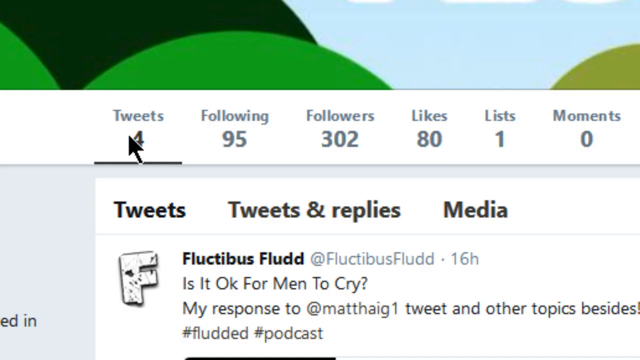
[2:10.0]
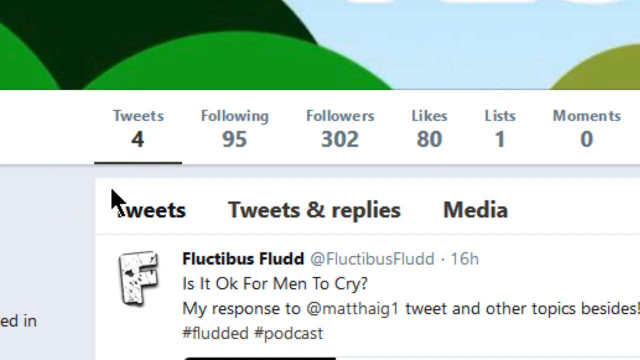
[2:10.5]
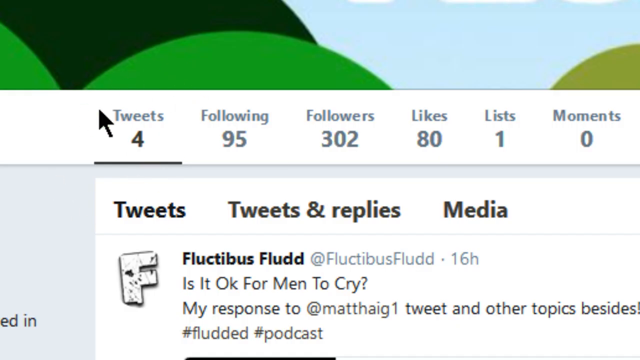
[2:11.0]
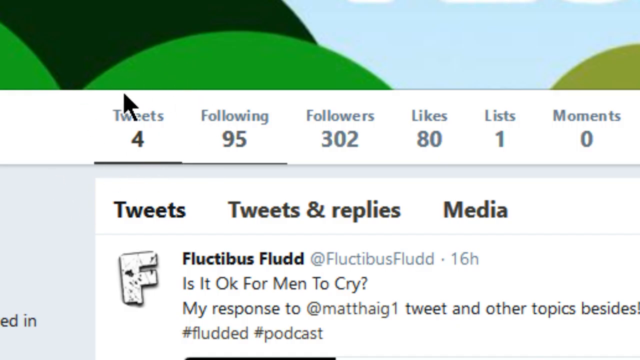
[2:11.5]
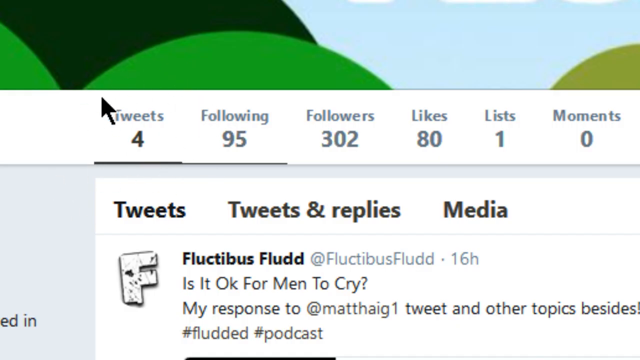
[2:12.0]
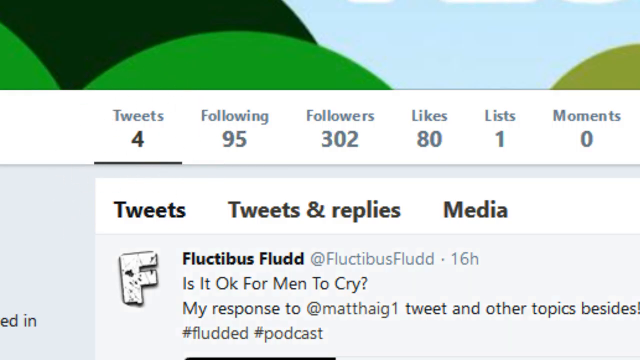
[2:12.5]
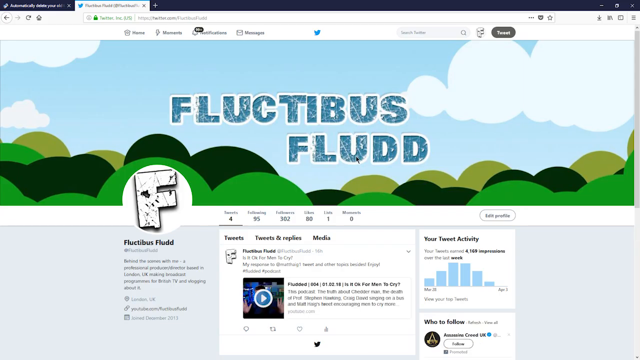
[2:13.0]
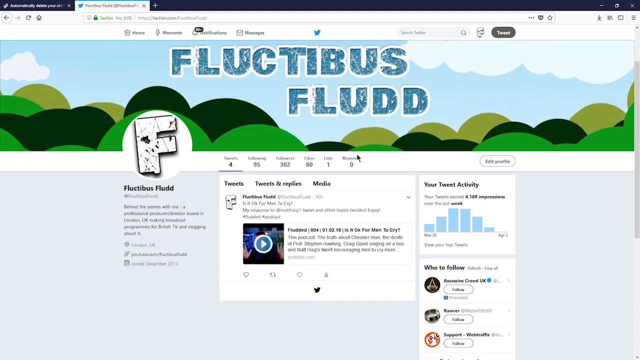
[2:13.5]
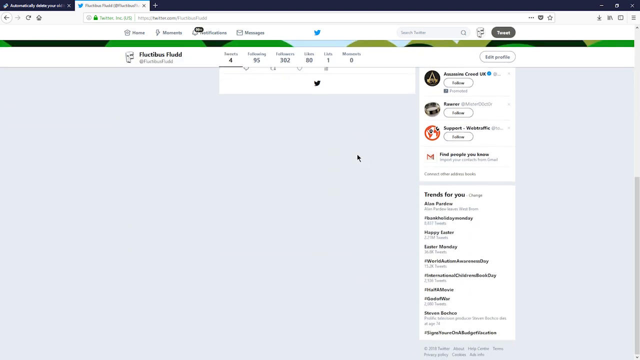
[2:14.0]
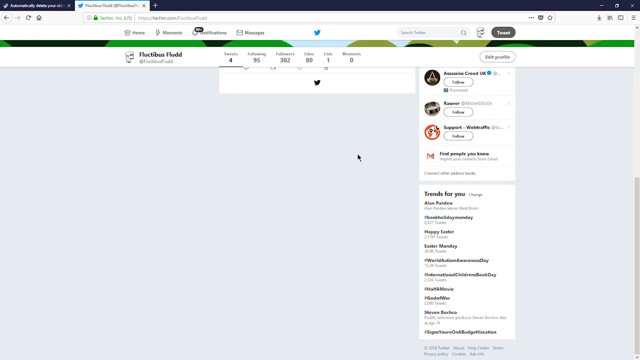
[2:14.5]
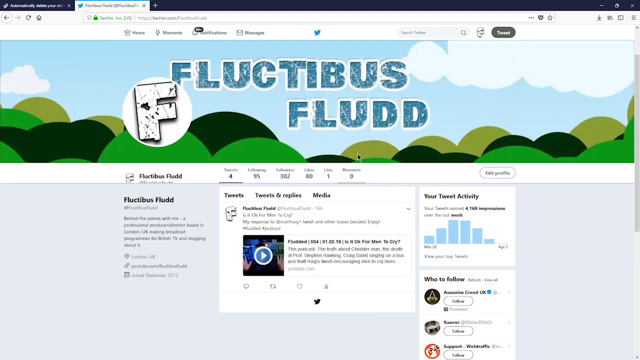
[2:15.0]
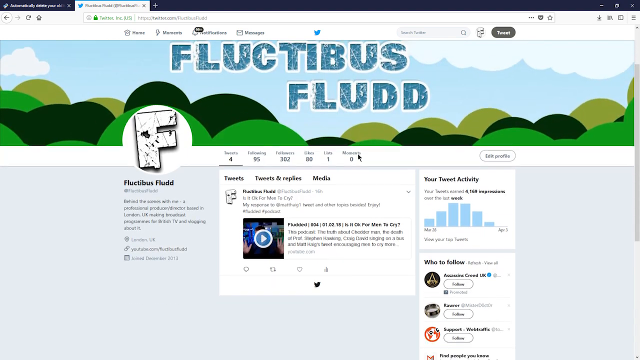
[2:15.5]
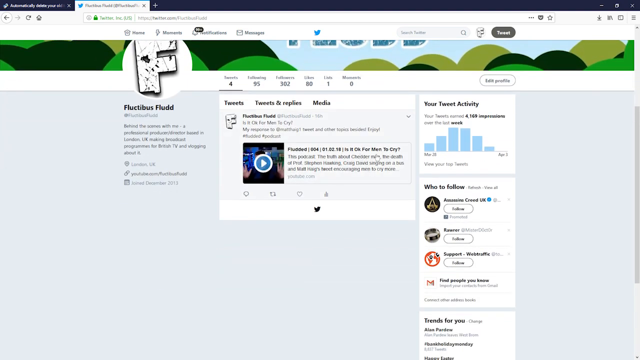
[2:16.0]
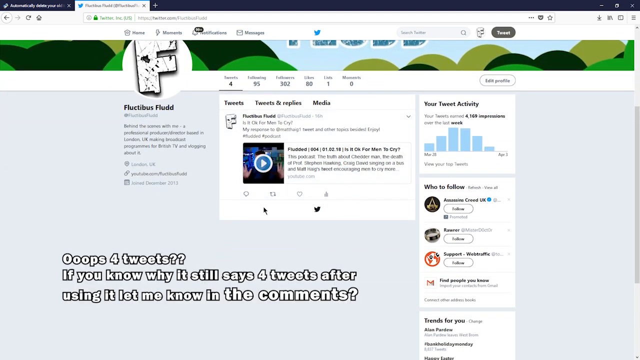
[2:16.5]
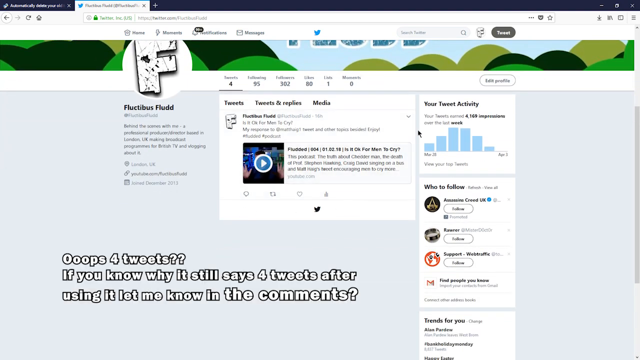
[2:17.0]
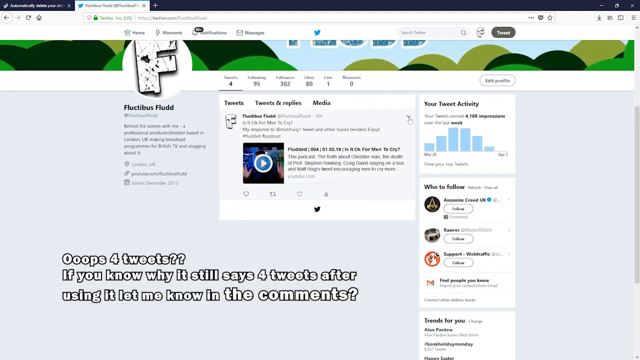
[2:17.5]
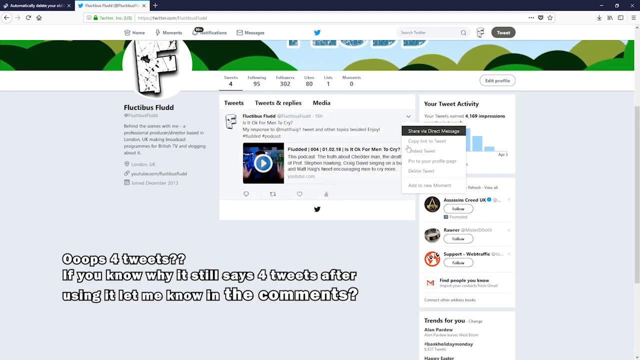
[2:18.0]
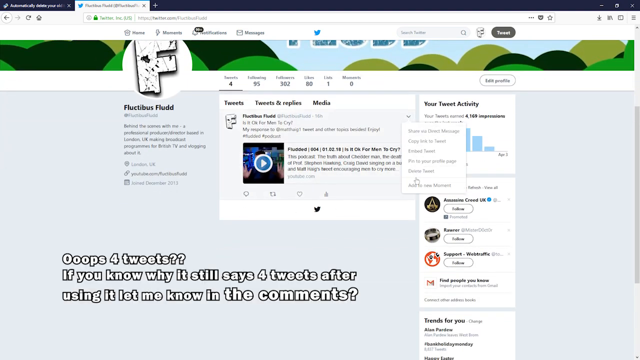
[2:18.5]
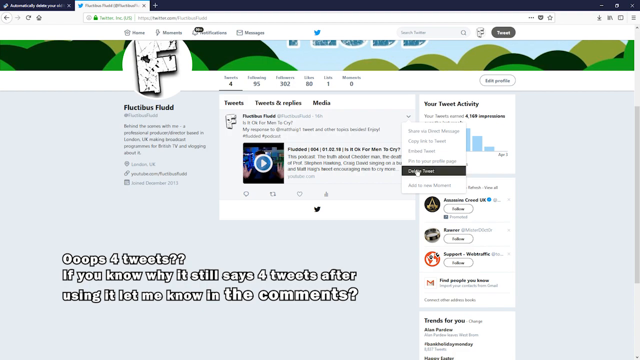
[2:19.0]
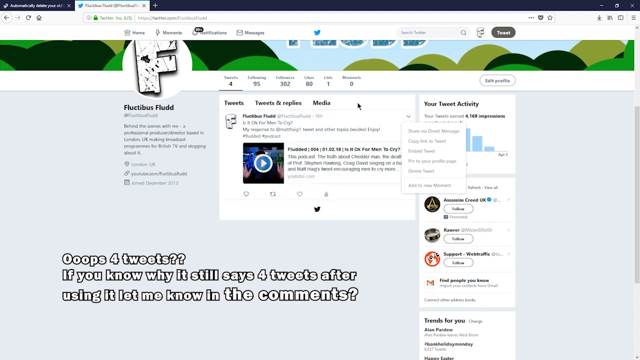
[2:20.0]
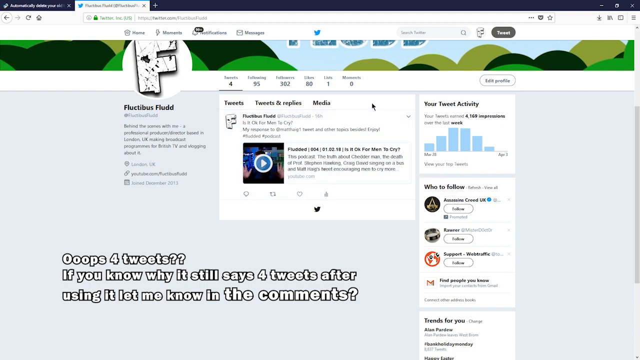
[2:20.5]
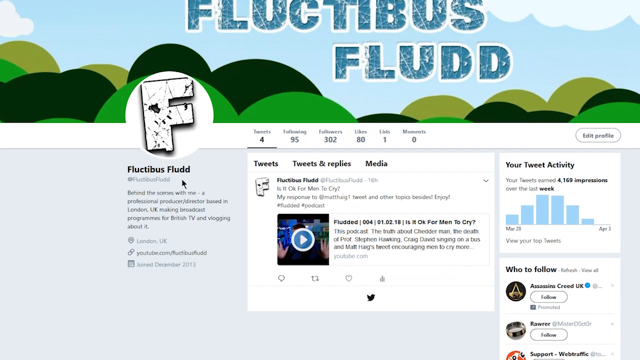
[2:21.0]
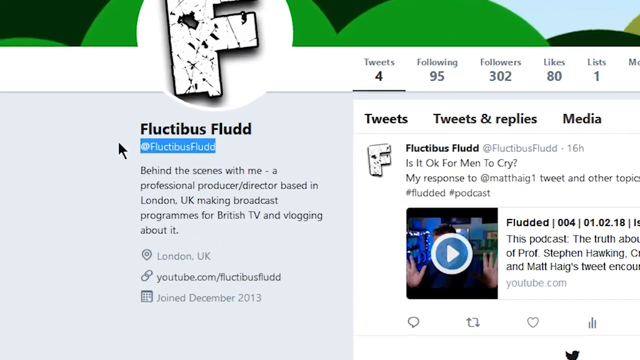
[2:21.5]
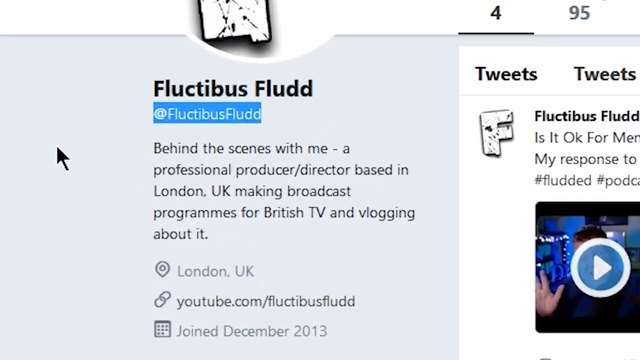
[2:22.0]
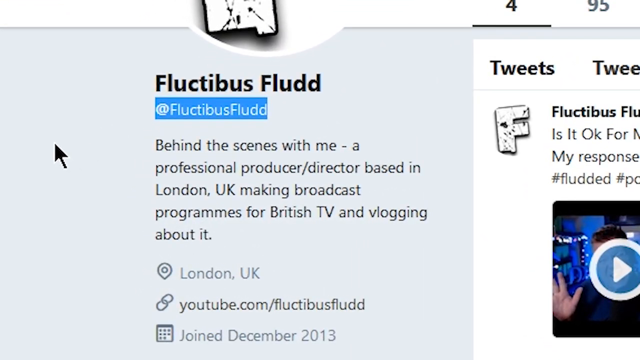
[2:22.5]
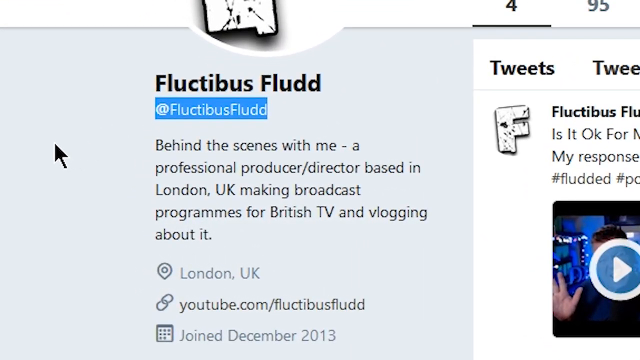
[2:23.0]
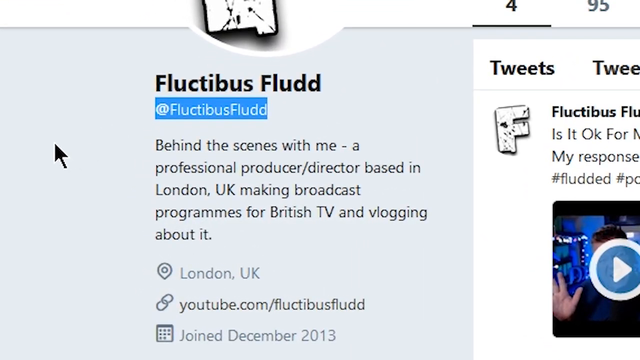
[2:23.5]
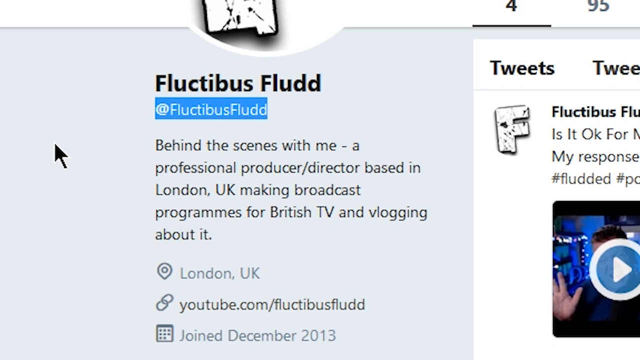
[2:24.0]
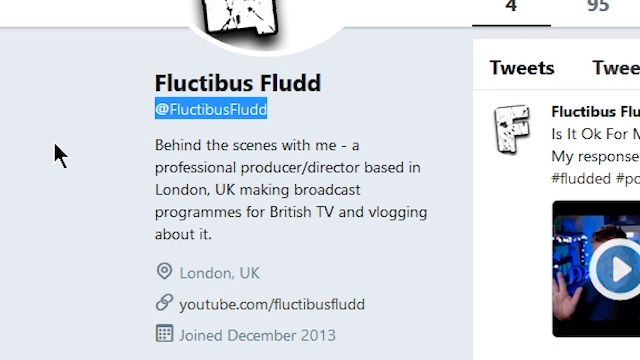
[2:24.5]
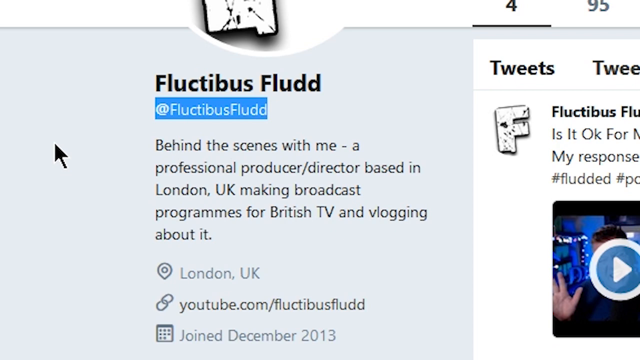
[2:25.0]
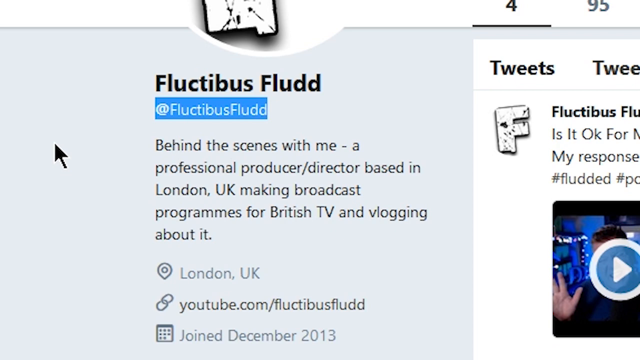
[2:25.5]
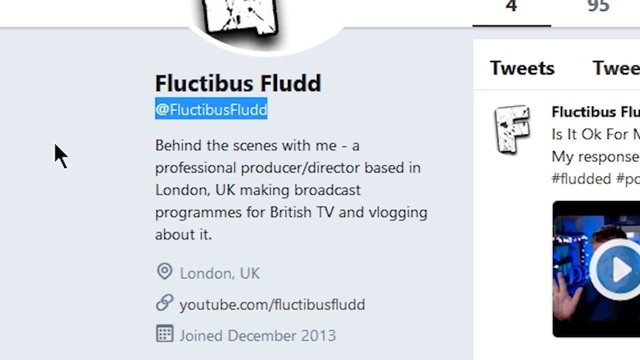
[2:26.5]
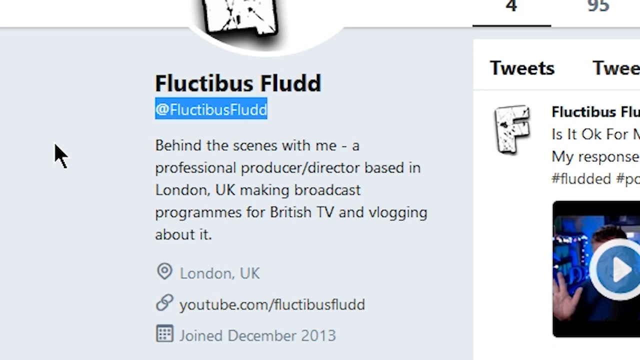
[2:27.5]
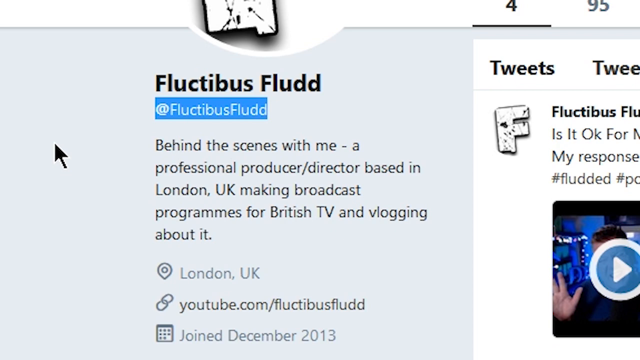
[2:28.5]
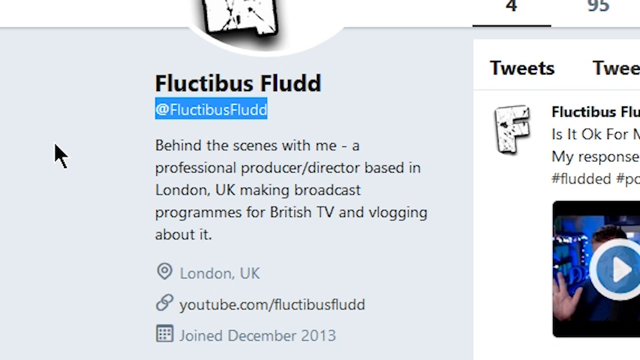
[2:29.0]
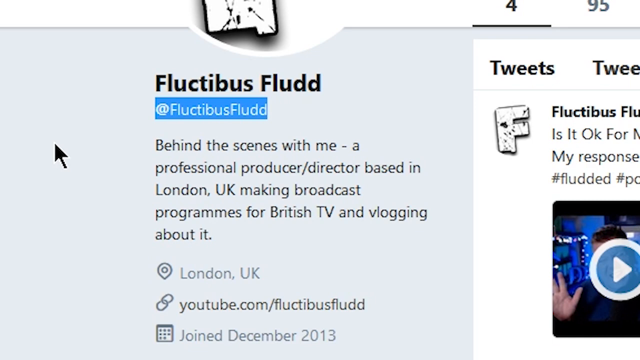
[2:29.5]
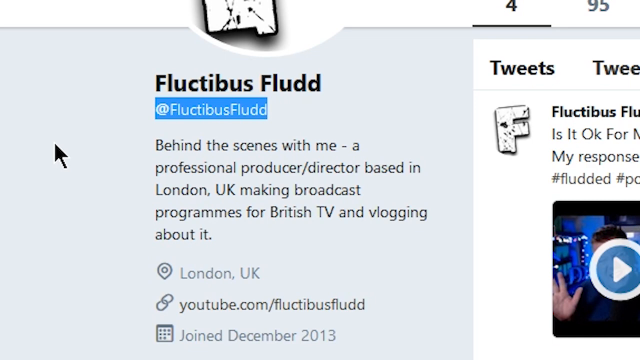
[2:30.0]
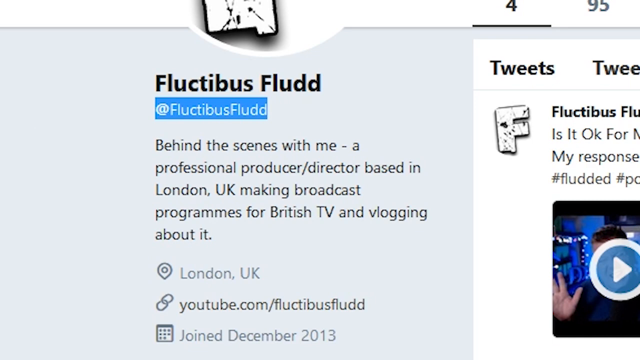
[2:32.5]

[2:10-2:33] A Twitter page is open for a user named Fluctibus Fludd. The view is zoomed in on the top panel, which shows 4 tweets, 95 following, 302 followers, 80 likes, 1 list and 0 moments. The mouse circles over the label showing 4 tweets. The view zooms out to show the whole website and browser, and the user scrolls to the bottom of the page and back up, revealing only one tweet on the account, showing a YouTube video titled "is it okay for men to cry?" On the bottom left of the screen, white text pops up: "oops, four tweets. If you know why it still says four tweets after using it, let me know in the comments." The user clicks the drop-down menu in the top right corner of the tweet and goes down to Delete Tweet, but does not click it, instead clicking another part of the screen to close the menu. The view then zooms into the left panel of the account, which shows the username Fluctibus Fludd and, underneath, a description, location, YouTube link and join date. The user highlights the username "@FluctibusFludd".